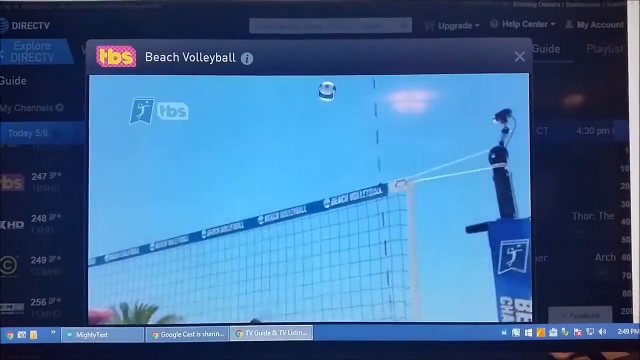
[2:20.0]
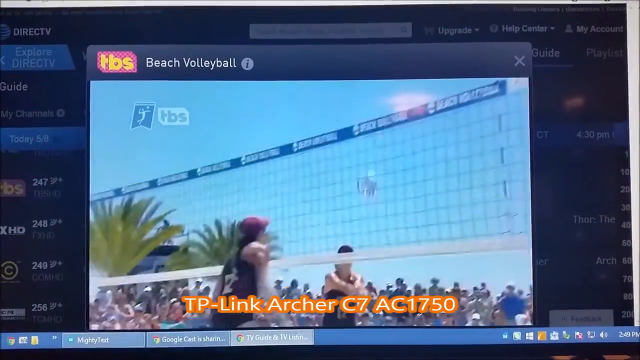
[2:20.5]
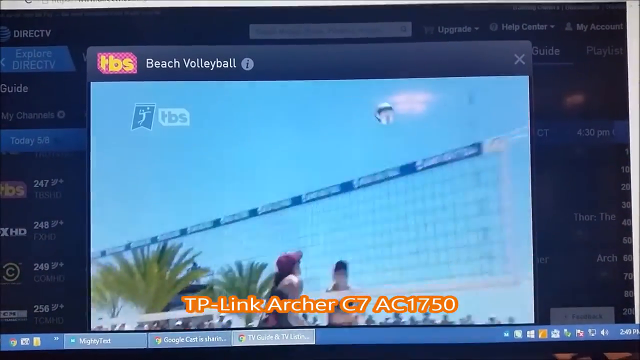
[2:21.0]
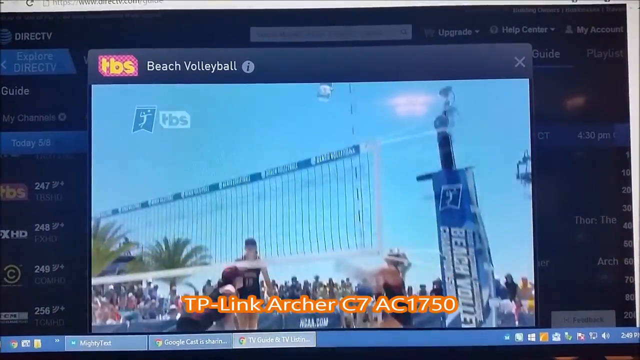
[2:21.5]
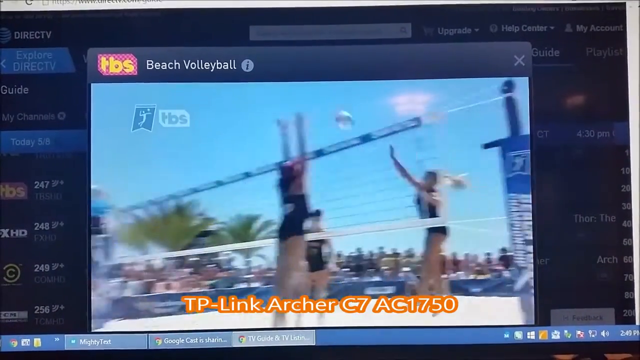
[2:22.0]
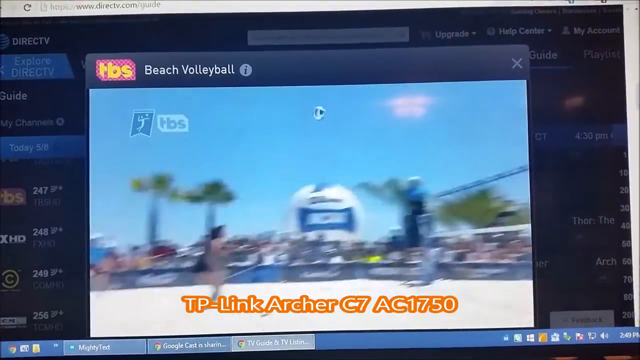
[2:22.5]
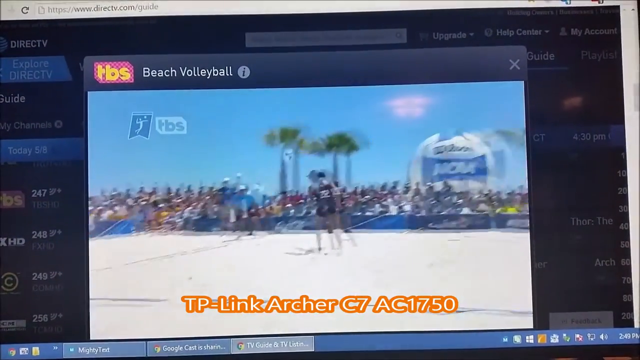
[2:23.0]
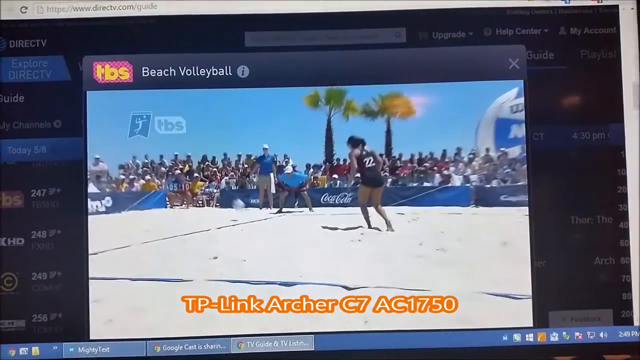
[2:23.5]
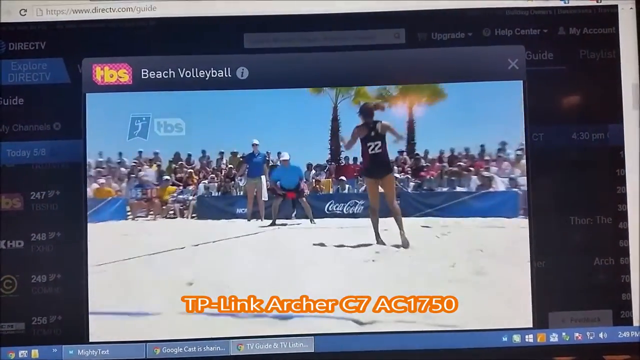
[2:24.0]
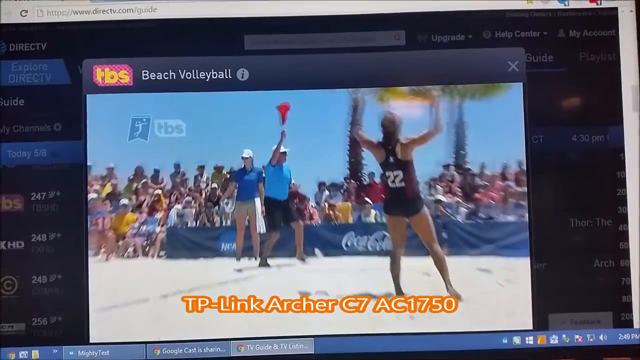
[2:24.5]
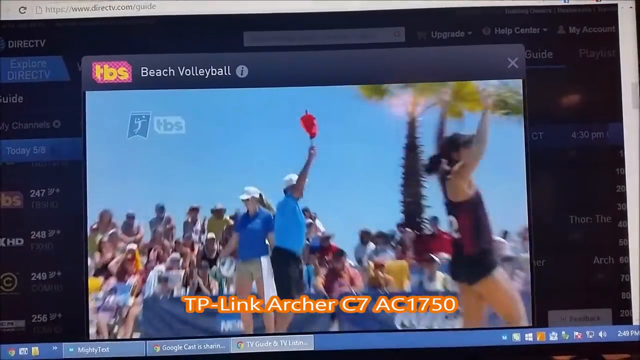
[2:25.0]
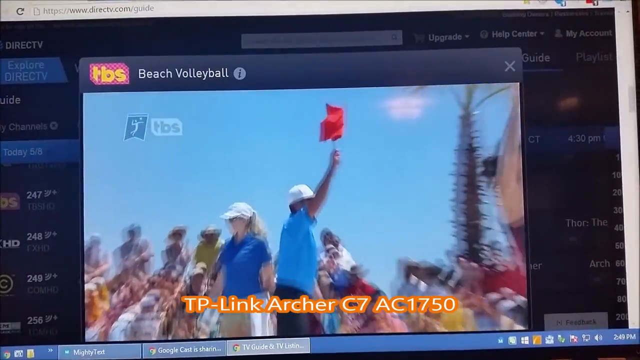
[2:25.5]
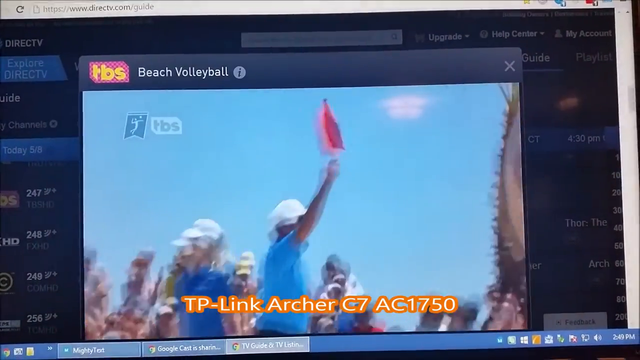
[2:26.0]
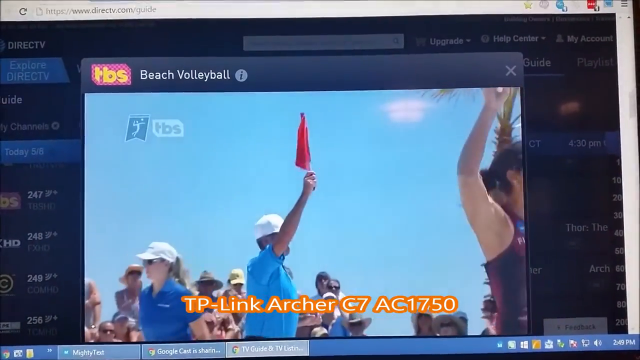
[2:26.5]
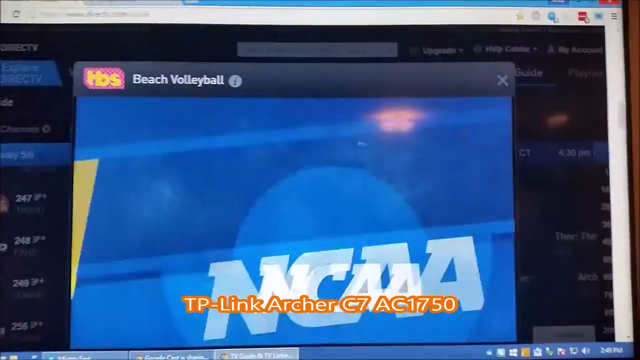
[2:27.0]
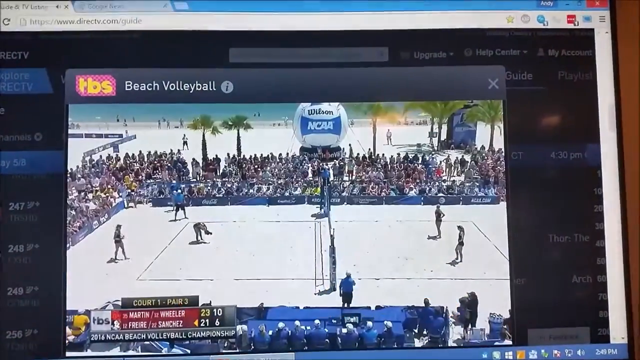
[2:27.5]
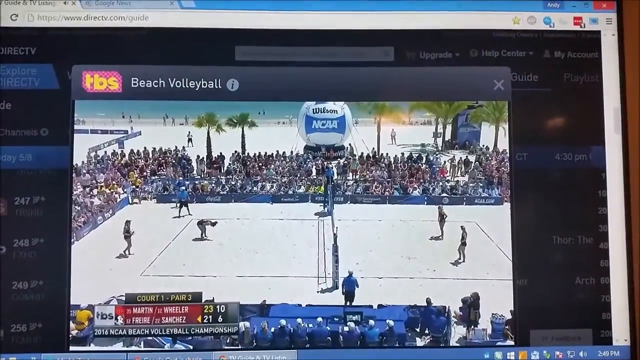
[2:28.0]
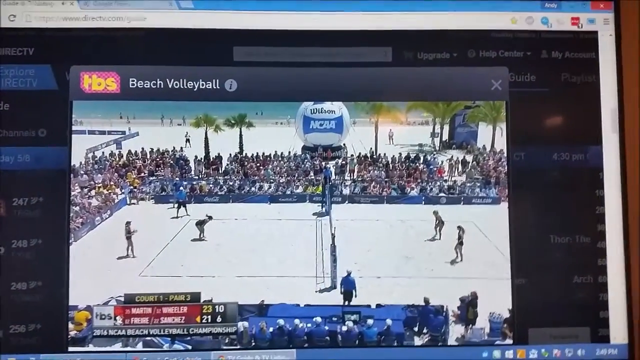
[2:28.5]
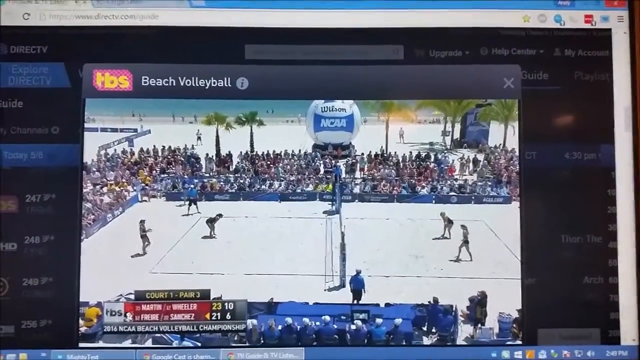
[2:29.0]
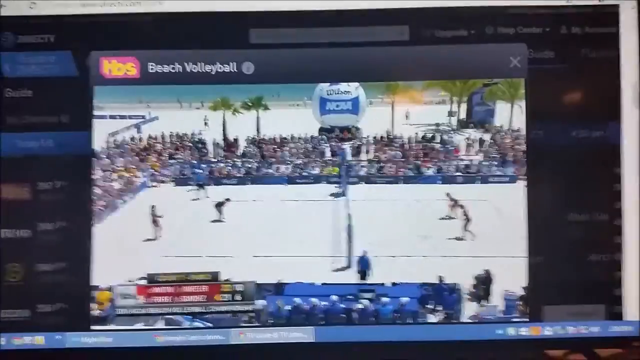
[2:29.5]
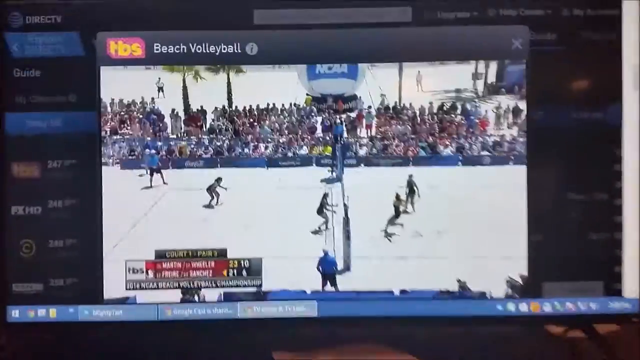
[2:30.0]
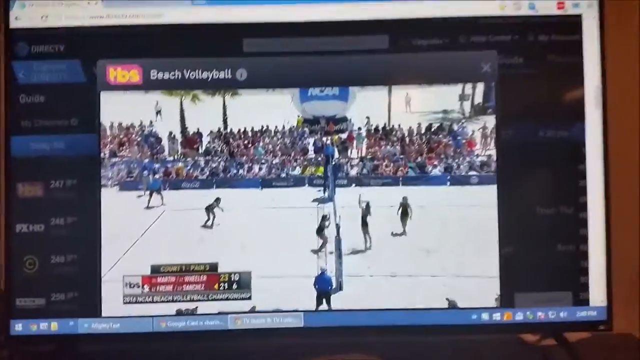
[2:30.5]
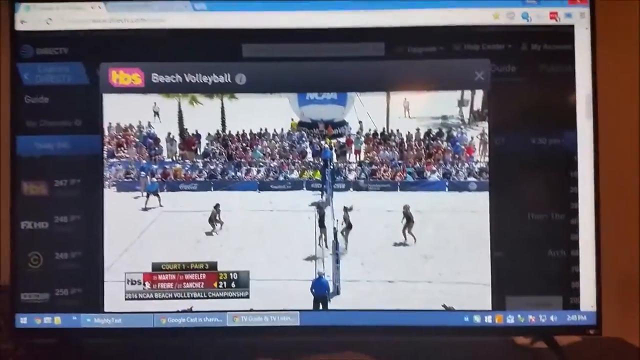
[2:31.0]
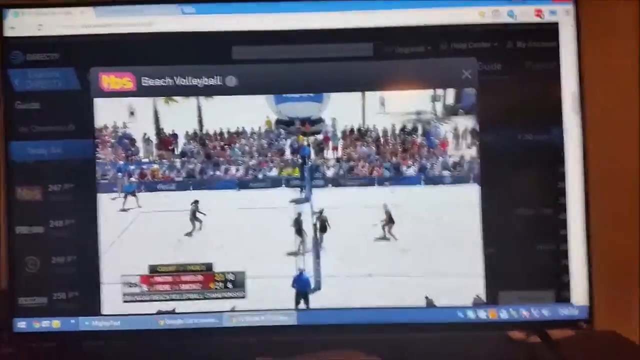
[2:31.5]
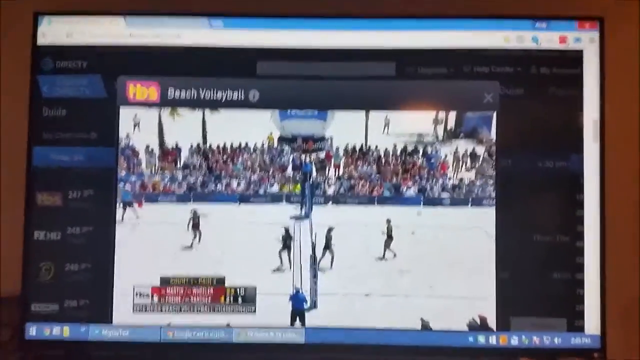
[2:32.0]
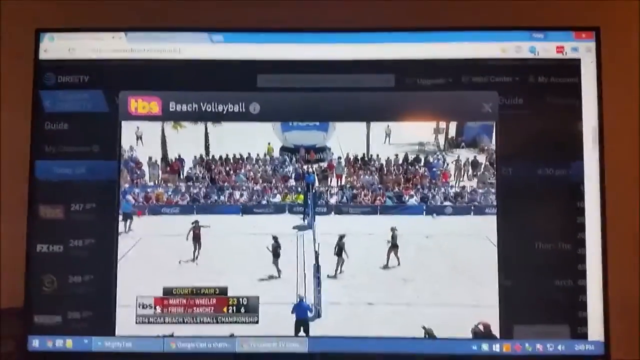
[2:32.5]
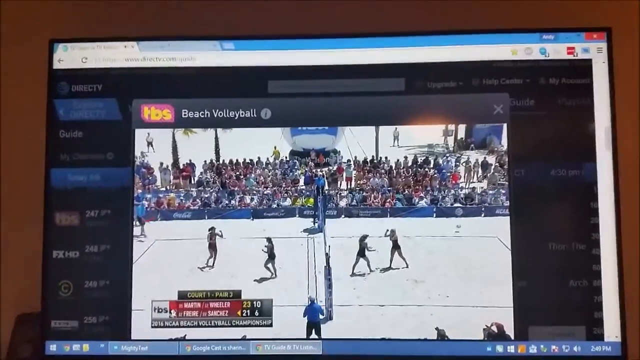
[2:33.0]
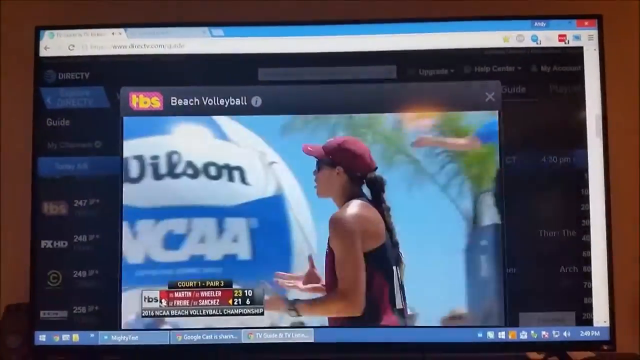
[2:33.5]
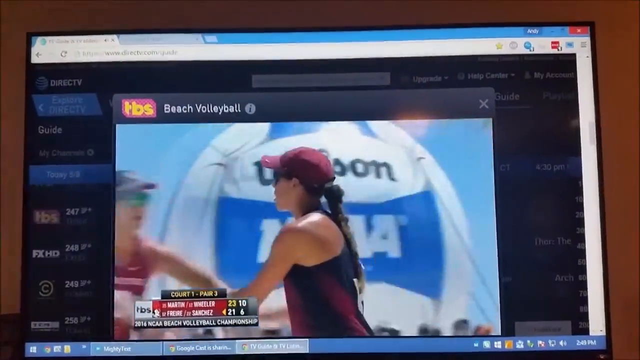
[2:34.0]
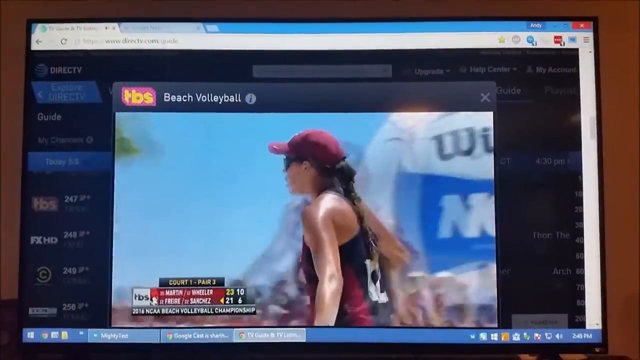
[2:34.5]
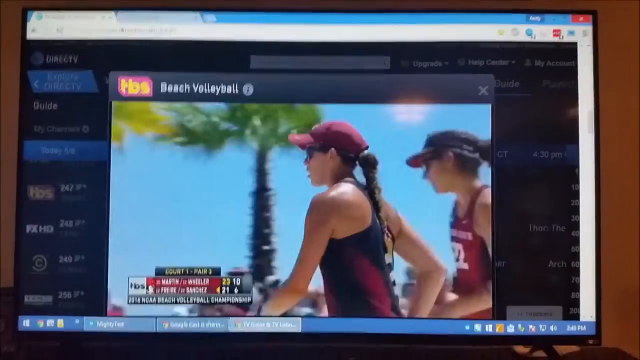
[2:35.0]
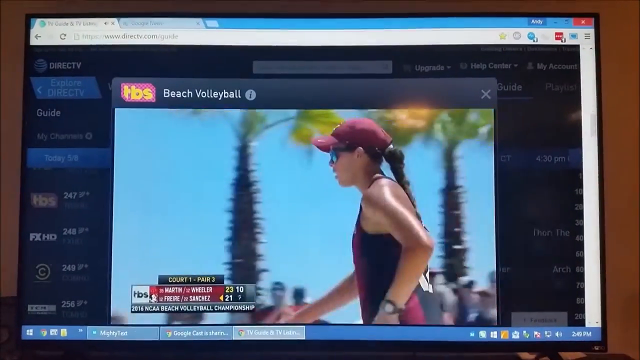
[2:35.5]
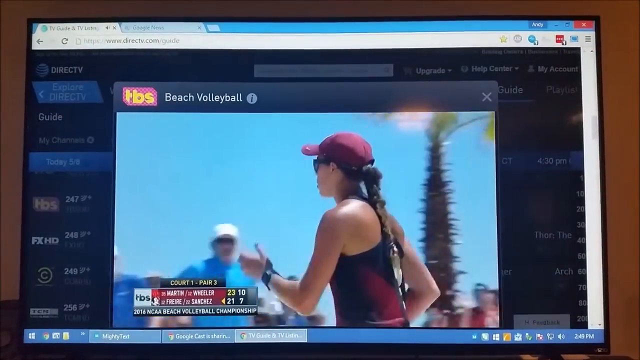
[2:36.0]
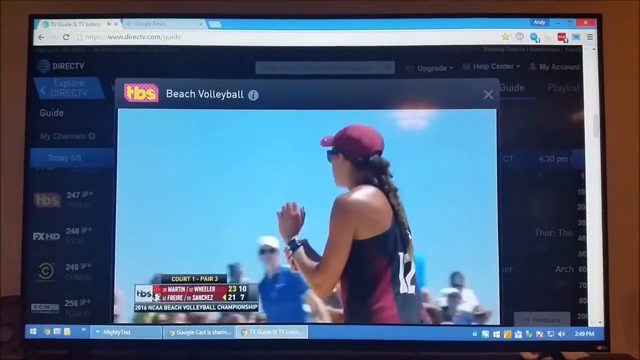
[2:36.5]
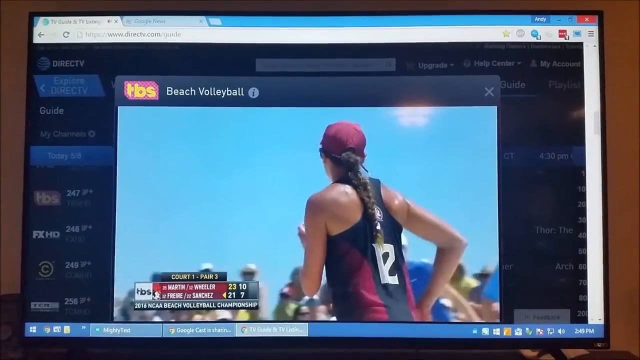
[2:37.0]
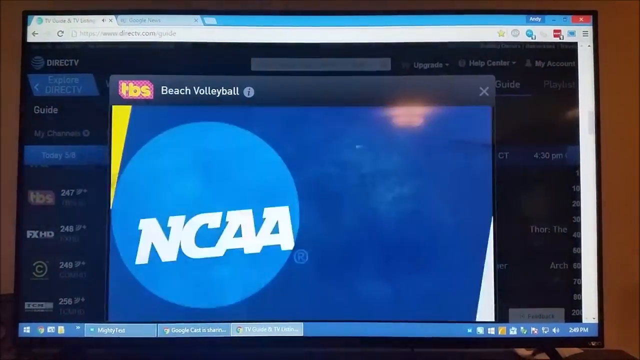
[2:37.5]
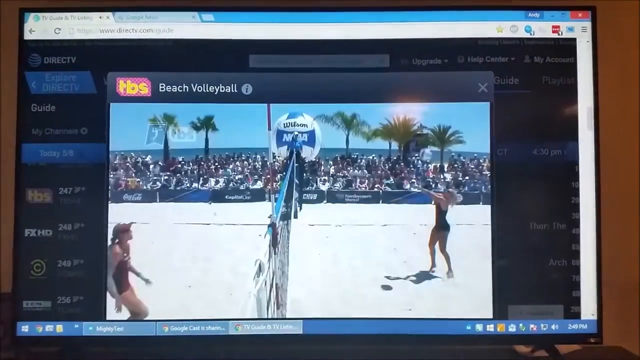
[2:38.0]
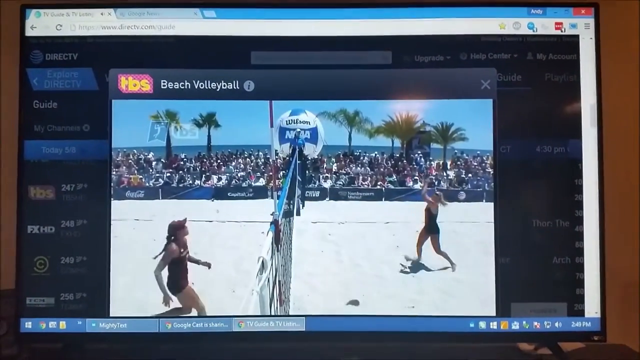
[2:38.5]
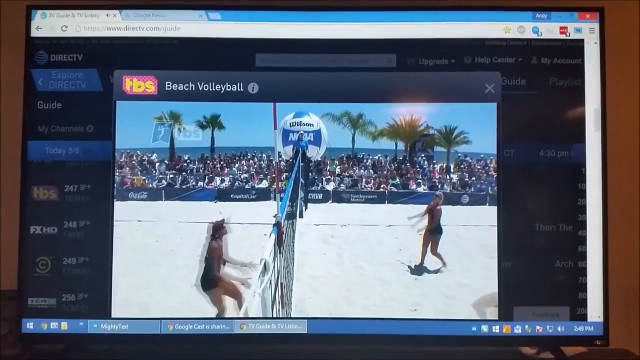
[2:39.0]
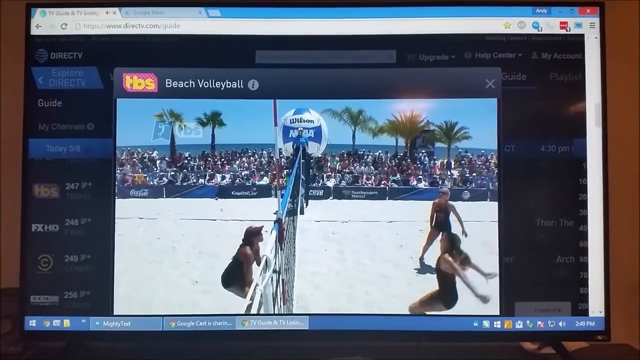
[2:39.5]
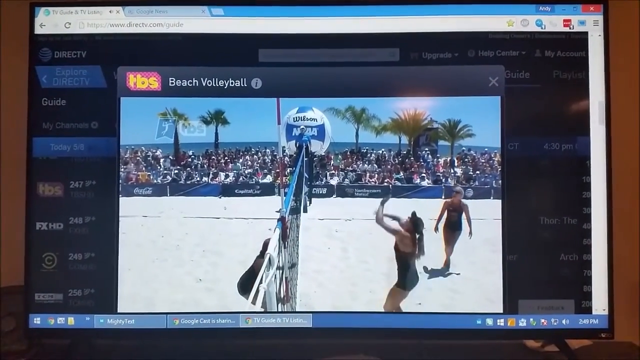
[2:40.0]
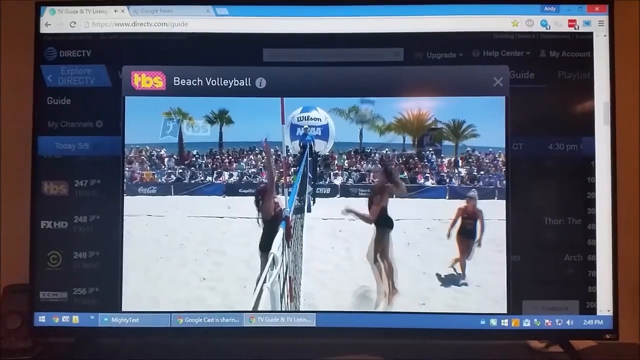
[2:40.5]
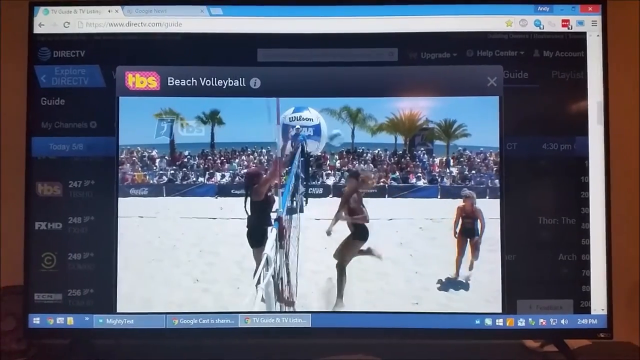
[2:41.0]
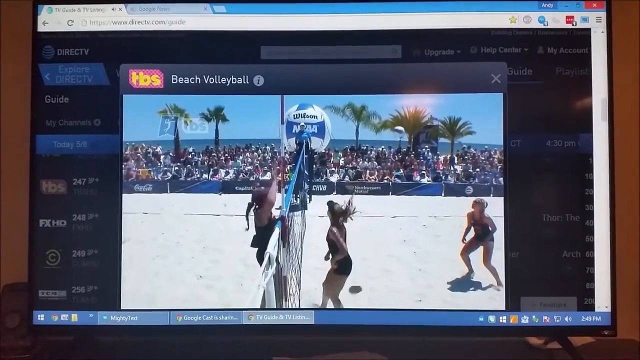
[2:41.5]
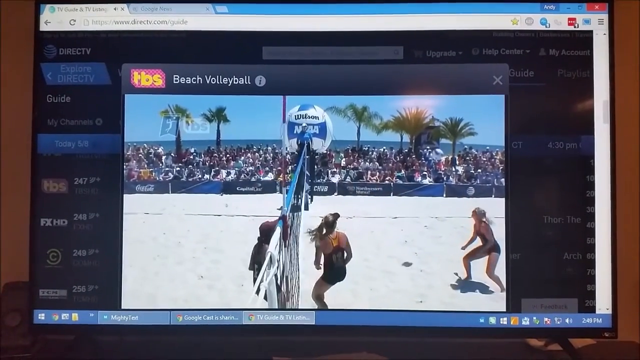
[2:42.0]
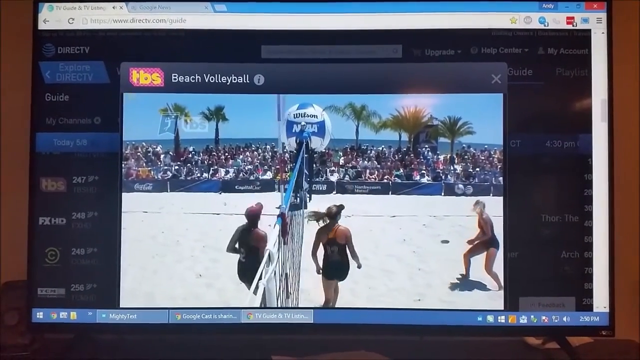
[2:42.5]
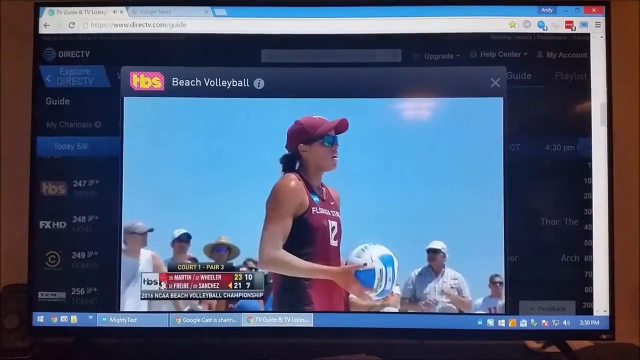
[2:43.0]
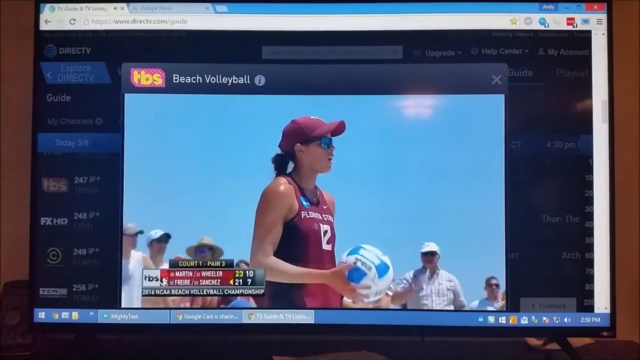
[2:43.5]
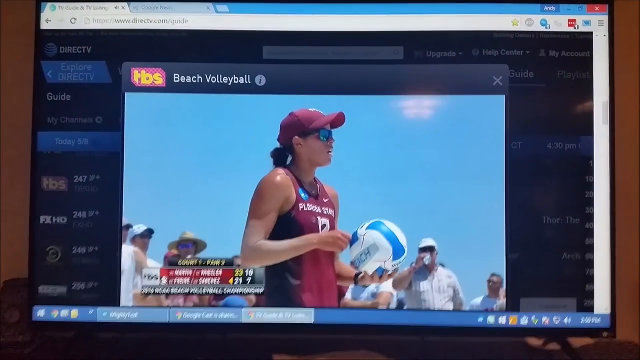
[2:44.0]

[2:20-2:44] A net stands in the middle of the volleyball court, with players on both sides of it and people in the background watching the match with keen interest. Palm trees are in the background, along with a giant volleyball that says "Wilson." The TBS logo is in the top left-hand corner of the screen. It is a bright, clear day, with a very clear sky and only a few clouds at the top of the screen.